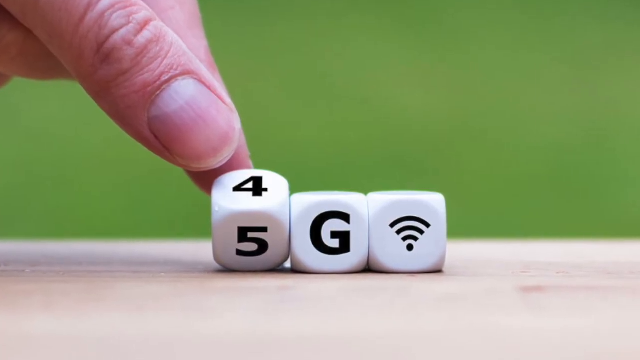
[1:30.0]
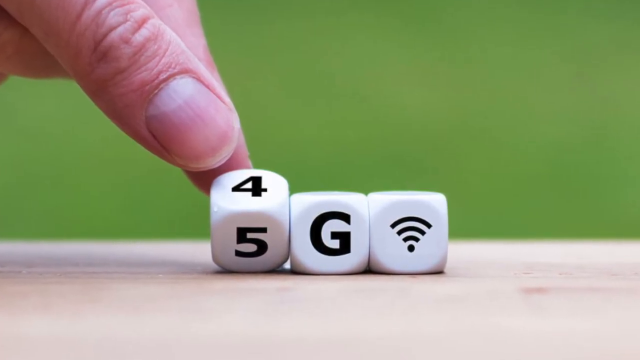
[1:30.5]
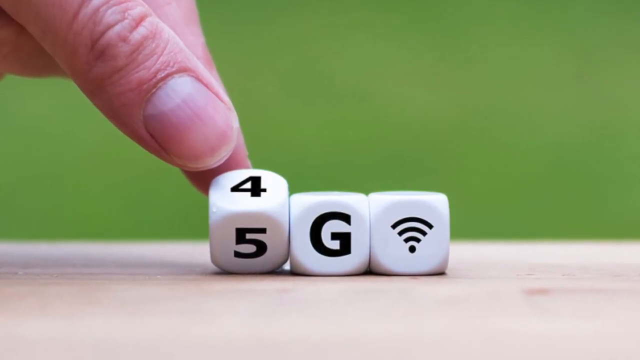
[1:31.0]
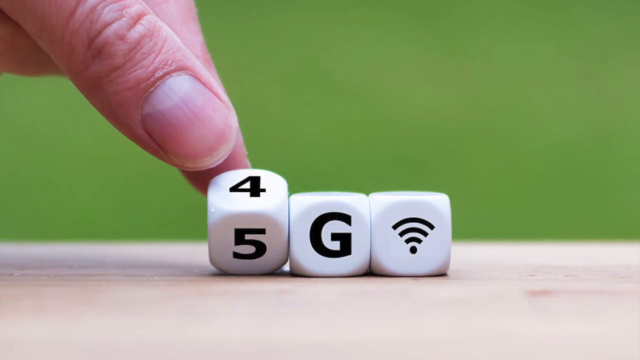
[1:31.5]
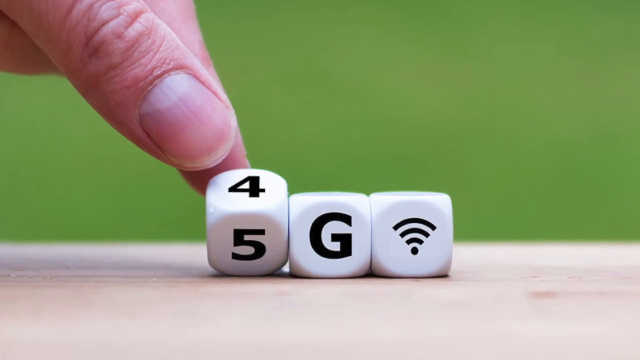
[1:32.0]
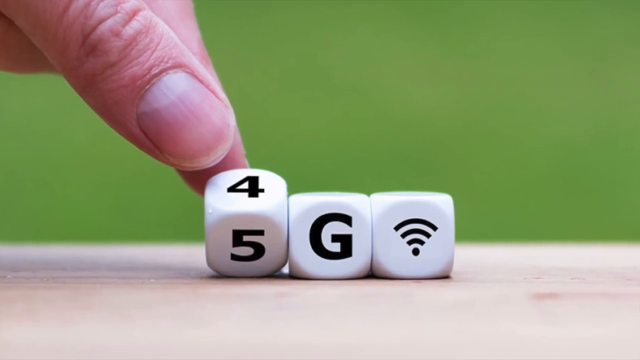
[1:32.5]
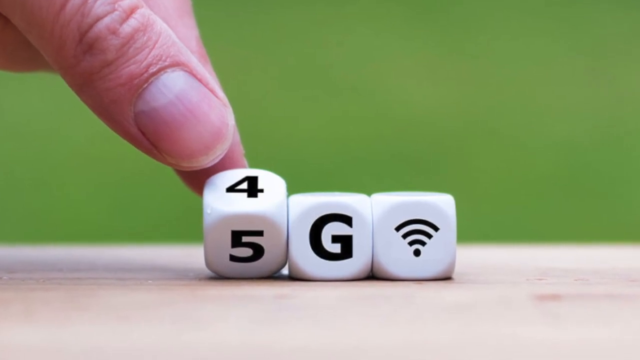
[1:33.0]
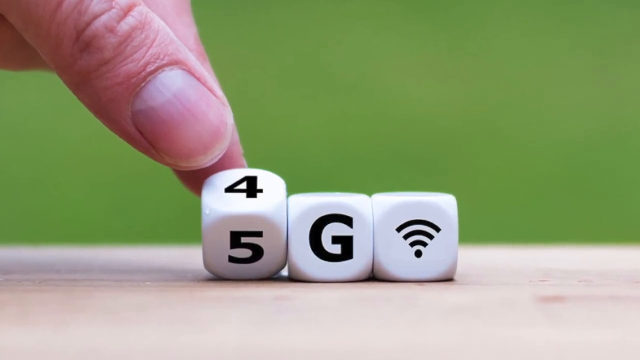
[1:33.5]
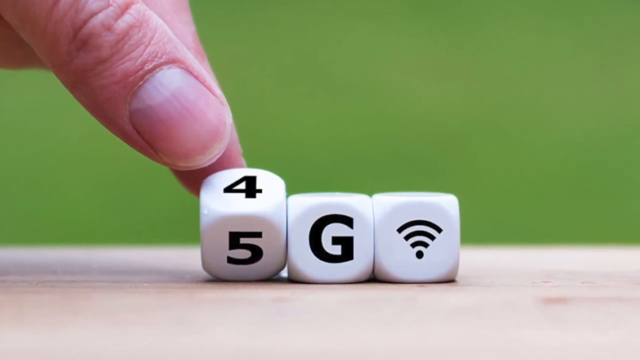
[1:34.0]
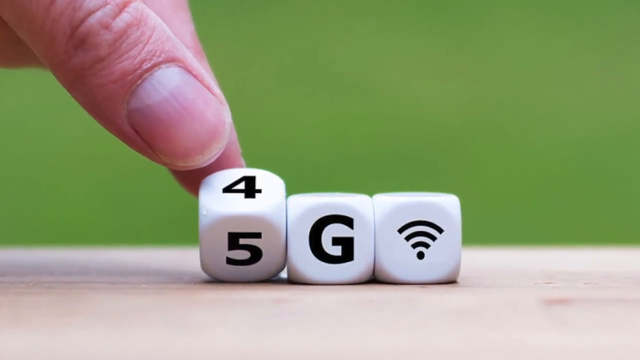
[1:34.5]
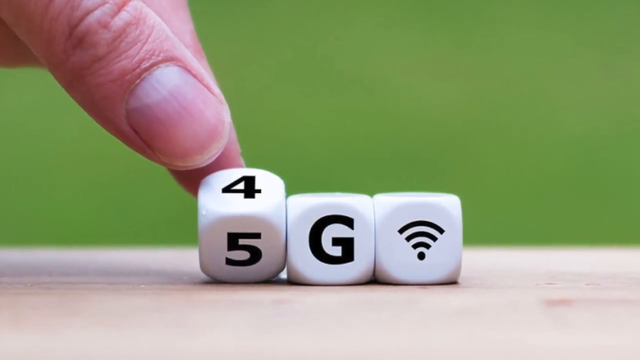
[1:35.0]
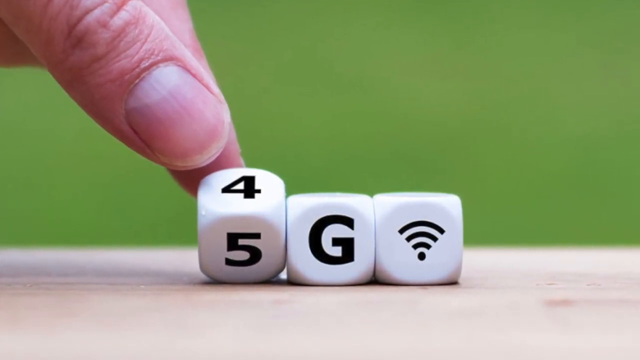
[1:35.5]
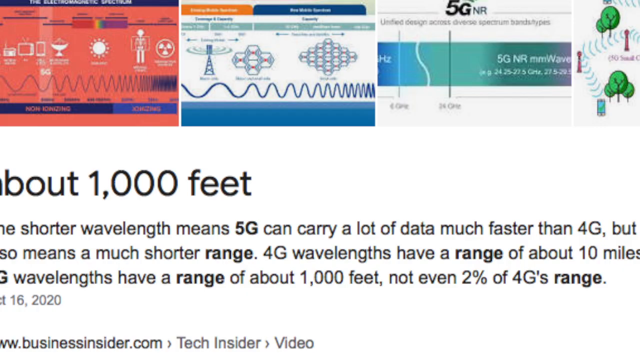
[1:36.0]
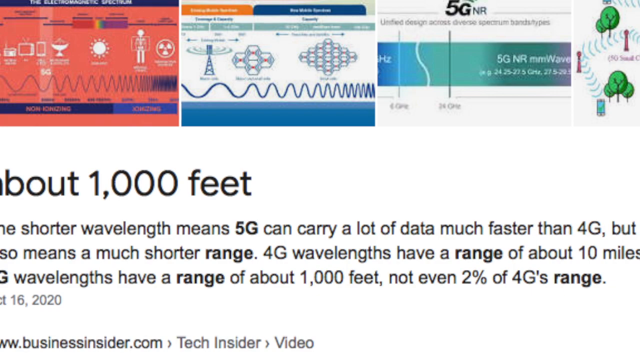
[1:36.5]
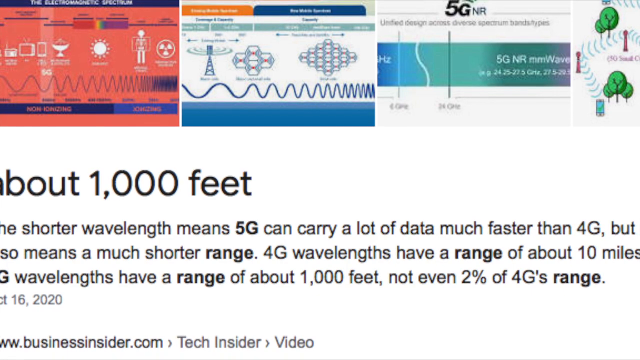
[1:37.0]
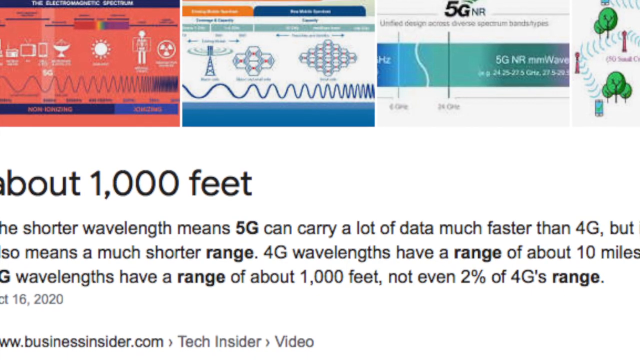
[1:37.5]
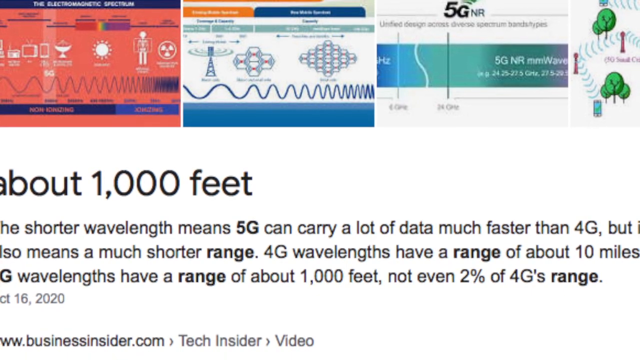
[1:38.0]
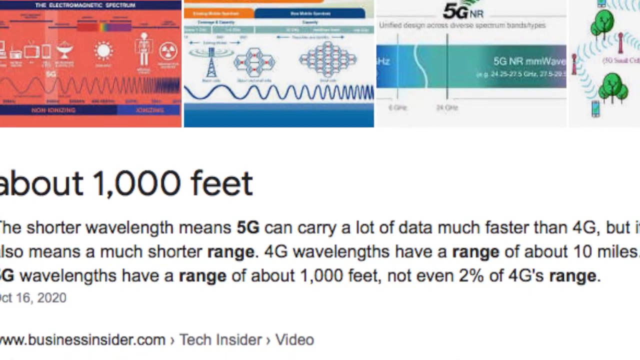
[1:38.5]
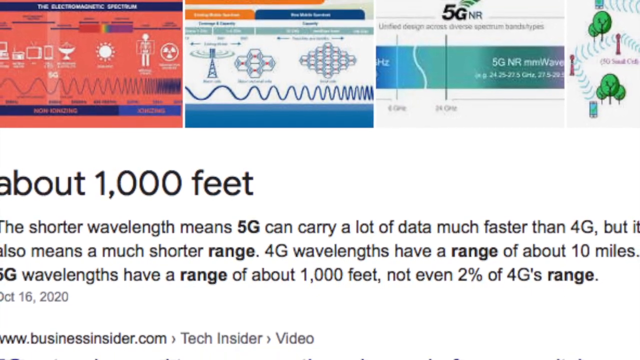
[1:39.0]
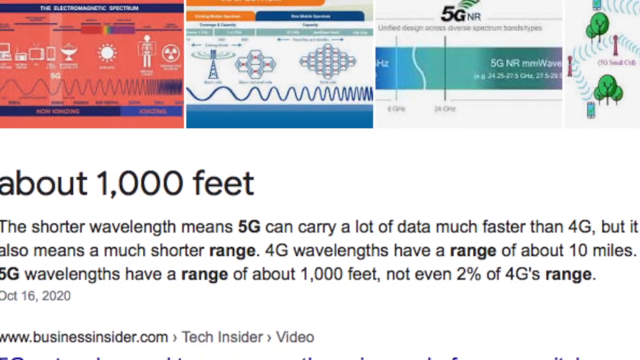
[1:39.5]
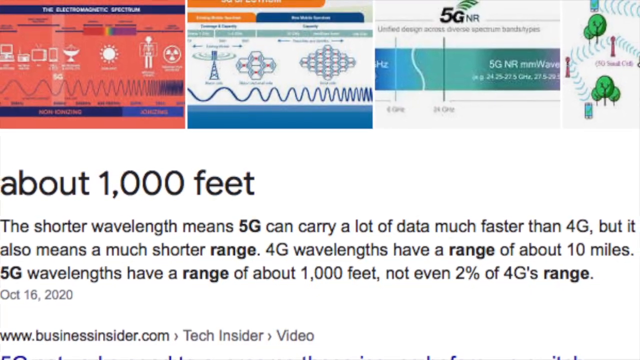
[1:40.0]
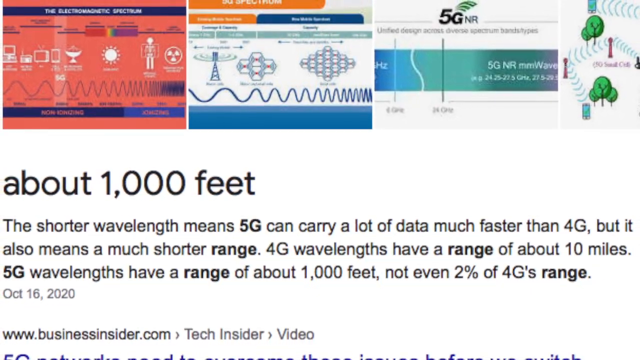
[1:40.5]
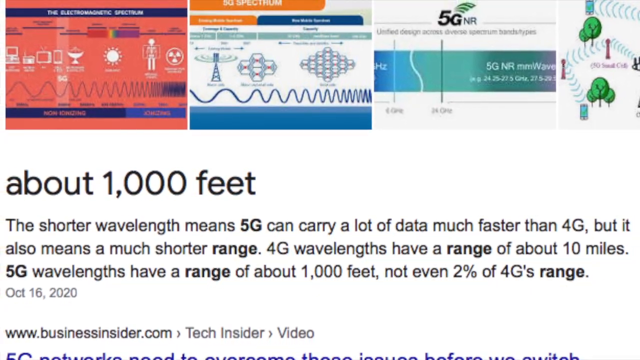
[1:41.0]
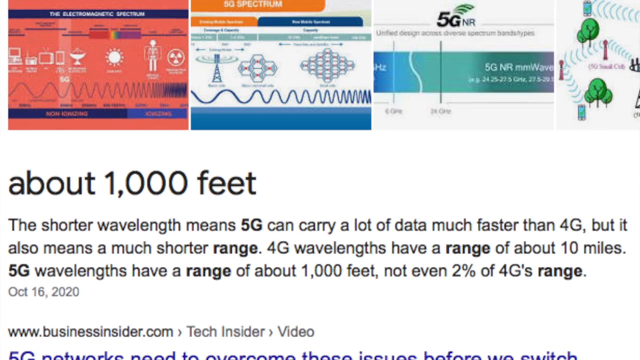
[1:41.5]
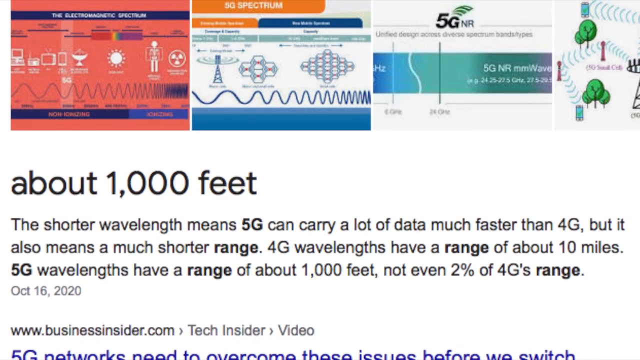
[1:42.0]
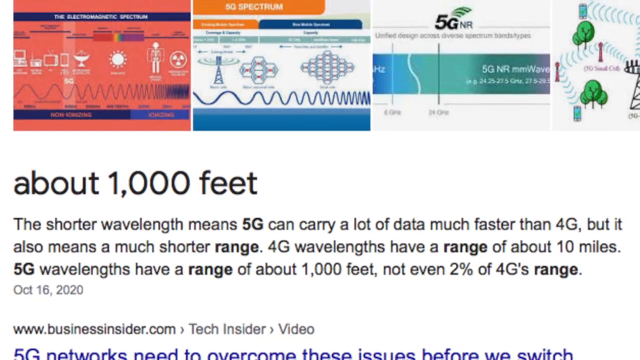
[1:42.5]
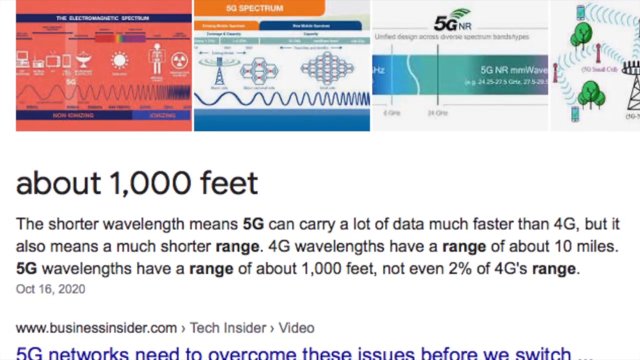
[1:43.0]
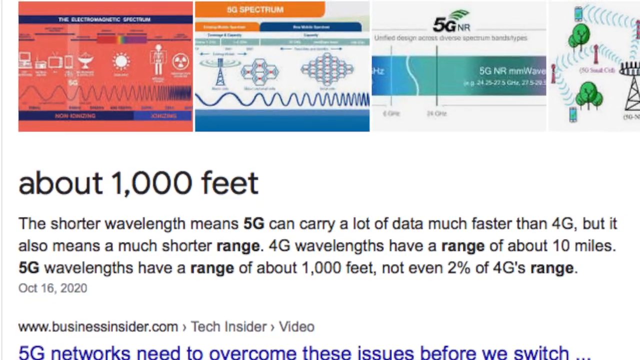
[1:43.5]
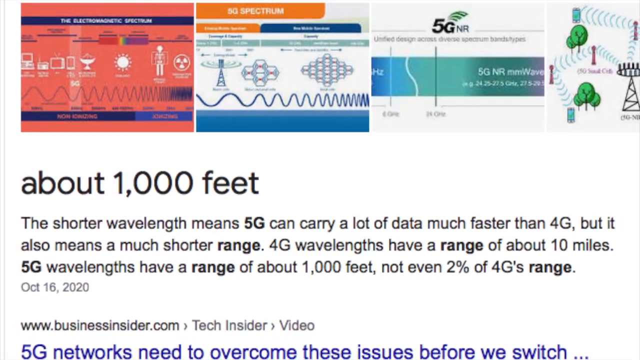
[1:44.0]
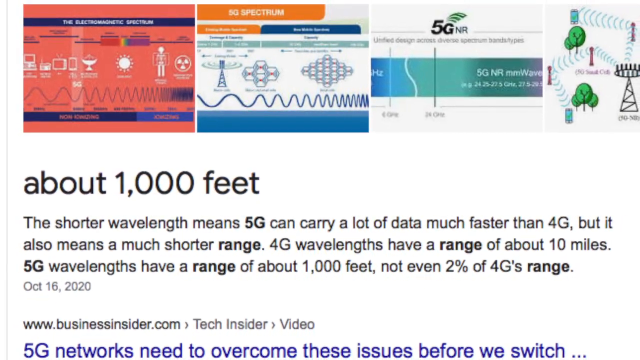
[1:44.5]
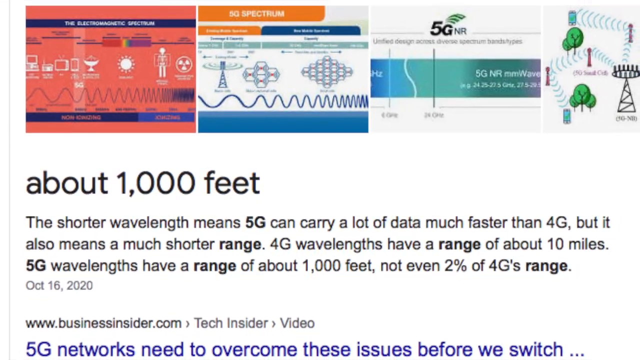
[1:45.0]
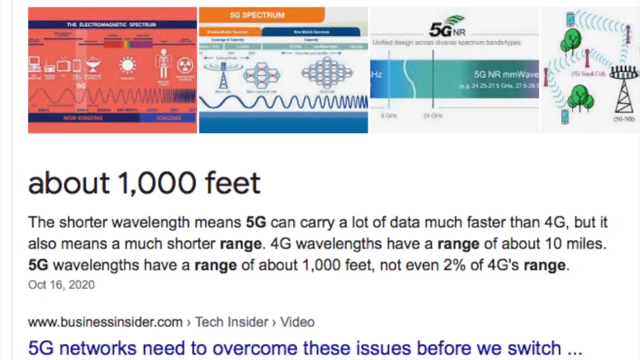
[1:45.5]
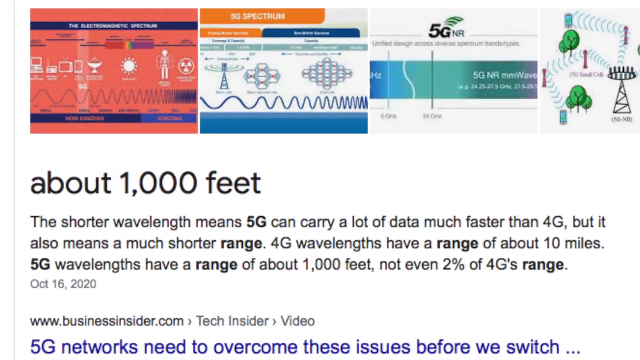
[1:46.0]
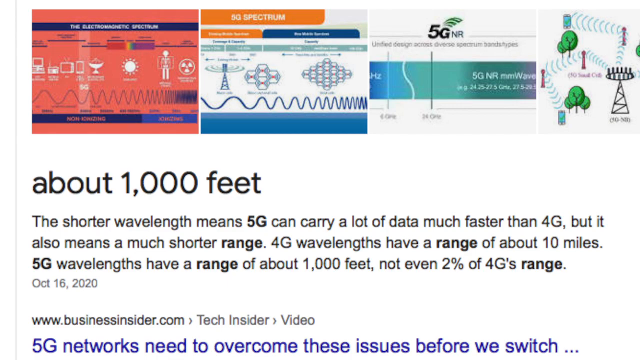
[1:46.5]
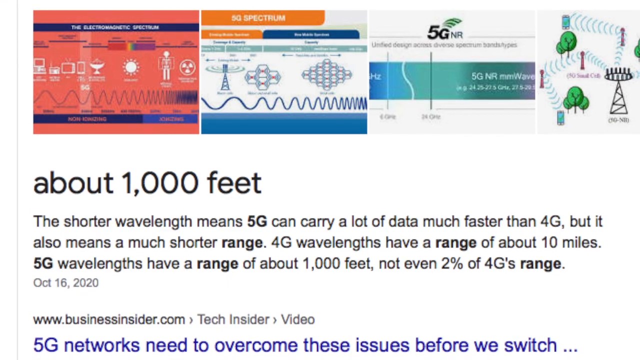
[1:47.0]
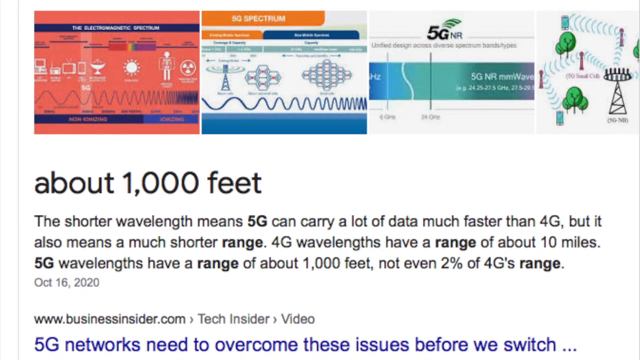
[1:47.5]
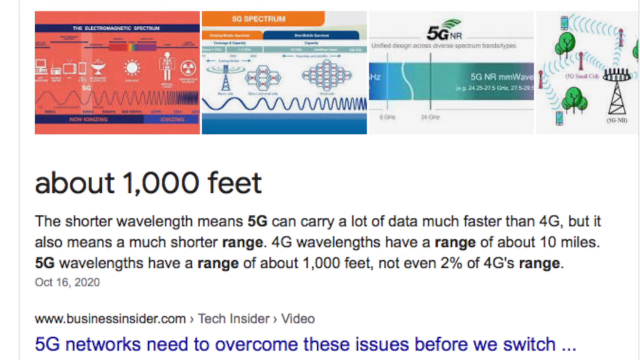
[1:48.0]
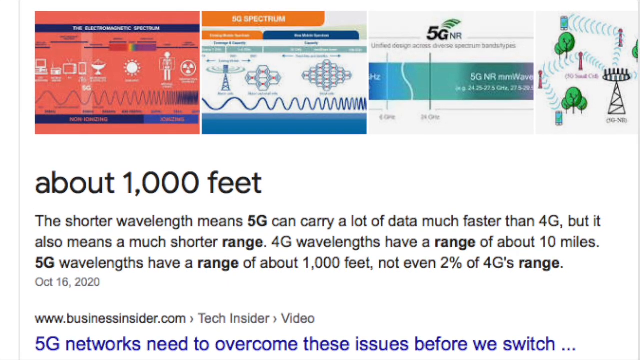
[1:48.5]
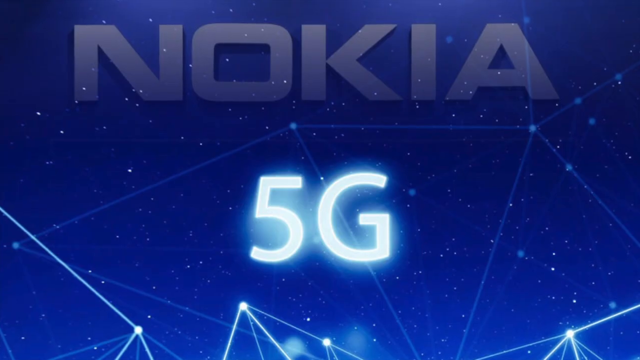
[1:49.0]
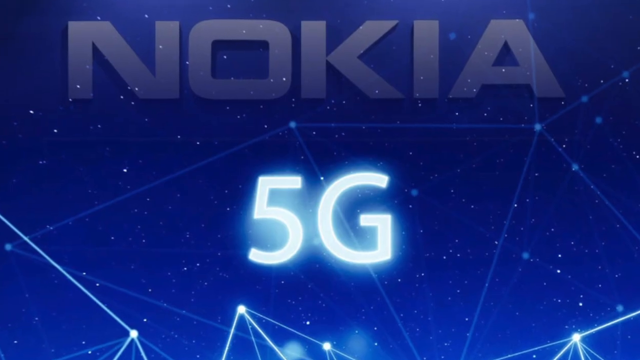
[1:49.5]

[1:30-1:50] A thumb and a finger turn a die among a set of dice; it has a four on top and a five facing the camera. The die next to it has the letter "G", and the die to the right of that has a network symbol pointing up. There is a green screen in the back, and this is all done on a table. The camera keeps slowly zooming in on the die. The scene then changes to a website with text on it. Images at the top show some sort of graphs relating to communication and 5G networking, and the bottom reads "about 1,000 feet". Text cut off on the left side concerns wavelengths and 5G. The view zooms out to show more of the page, revealing the full text: "the shorter wavelength means that 5G can carry a lot of data much faster than 4G but it also means a much shorter range. 4G wavelengths have a range of about 10 miles. 5G wavelengths have a range of about 1,000 feet not even 2% of 4G's range", dated October 16, 2020. The page turns out to be some sort of Google search page. Next comes a screen with outer space in the background, an illuminated "5G" at the bottom, and "Nokia" in transparent text at the very top.